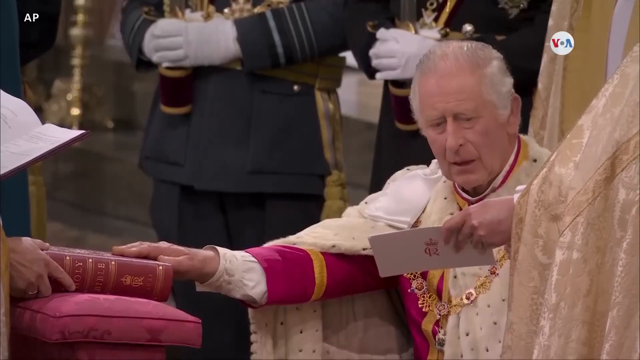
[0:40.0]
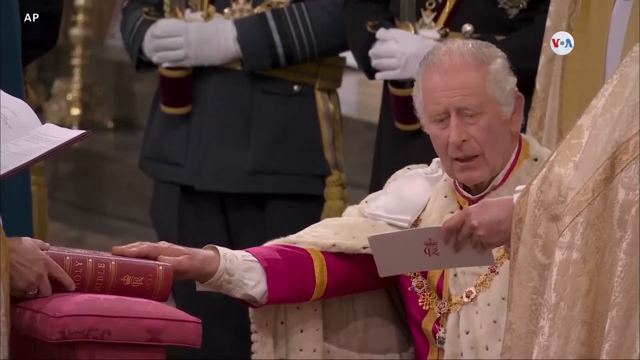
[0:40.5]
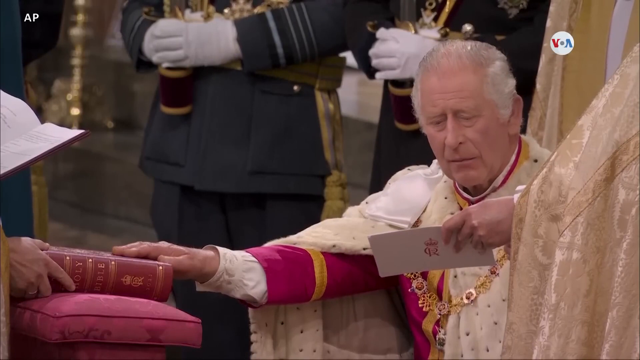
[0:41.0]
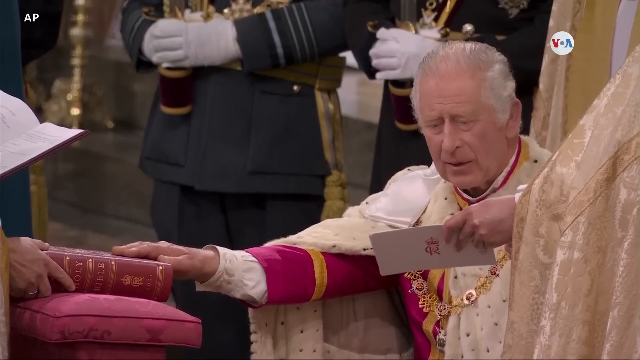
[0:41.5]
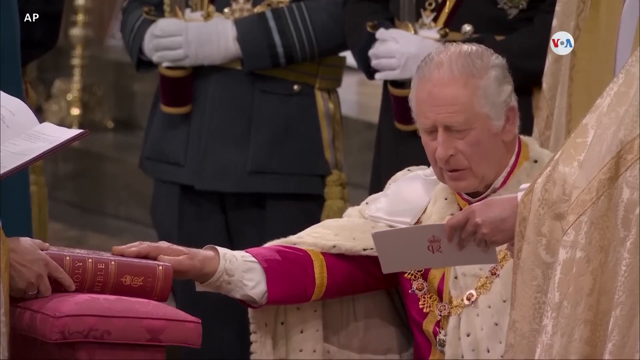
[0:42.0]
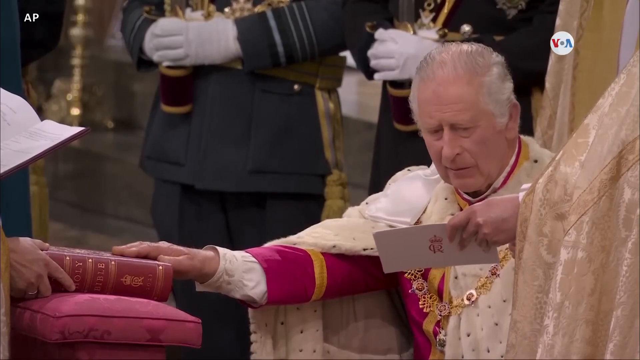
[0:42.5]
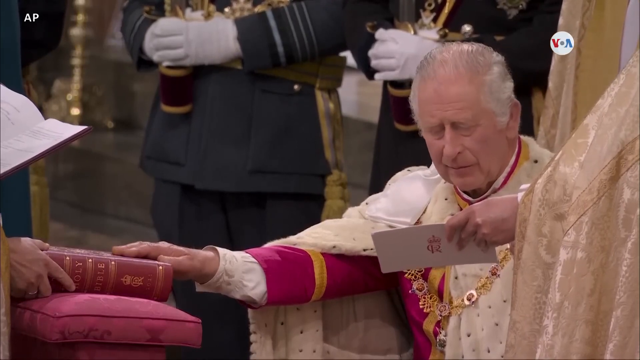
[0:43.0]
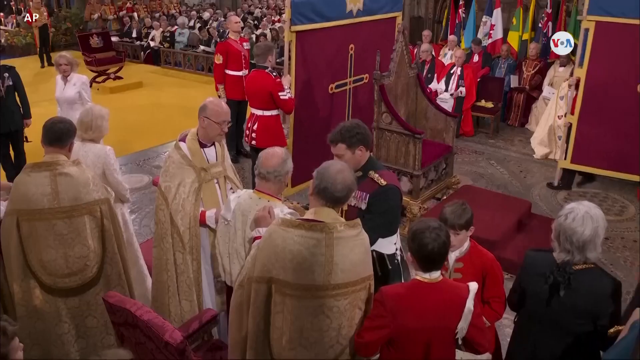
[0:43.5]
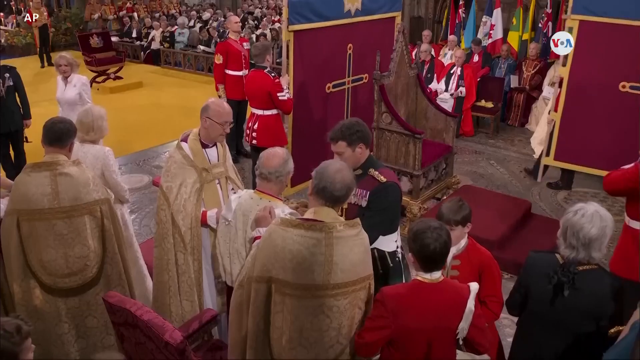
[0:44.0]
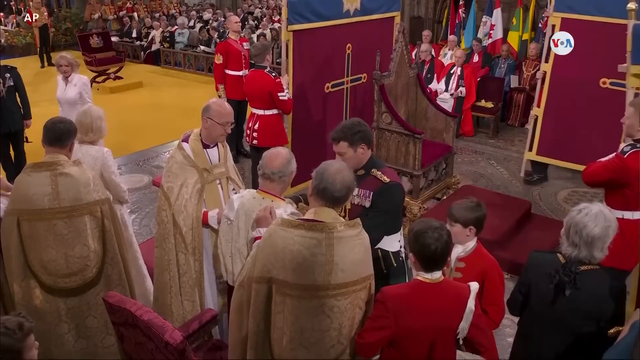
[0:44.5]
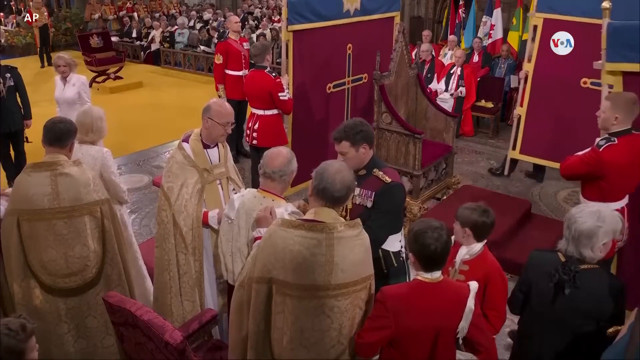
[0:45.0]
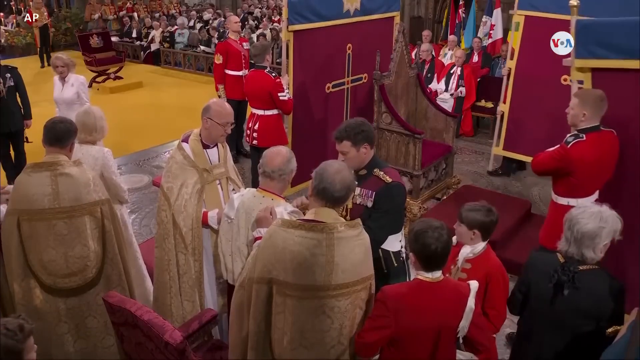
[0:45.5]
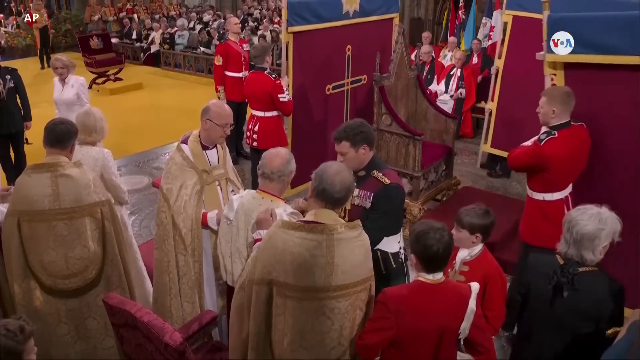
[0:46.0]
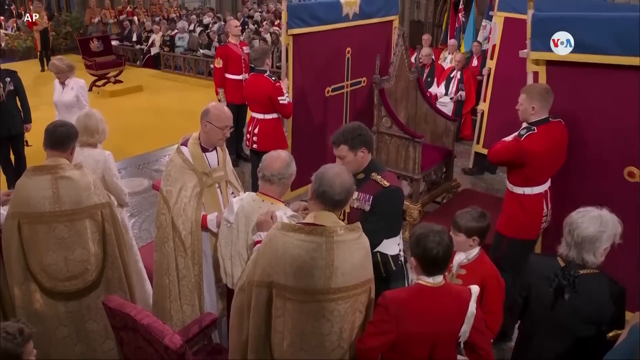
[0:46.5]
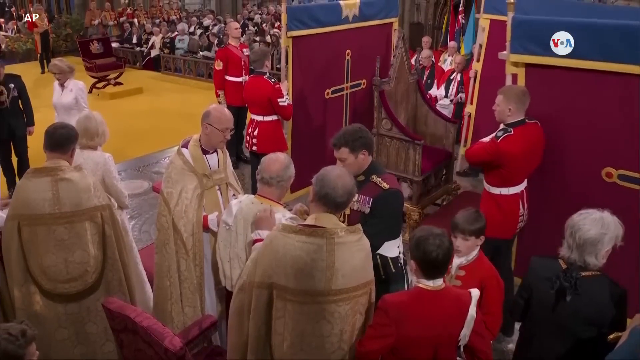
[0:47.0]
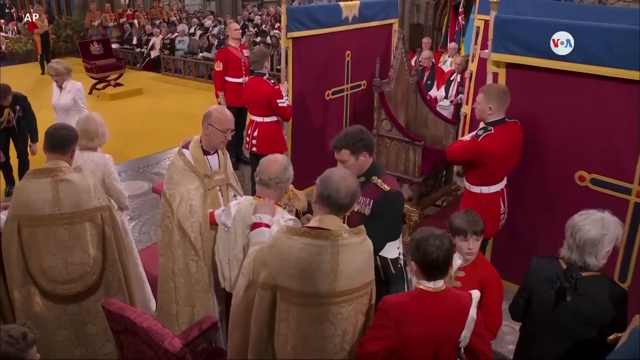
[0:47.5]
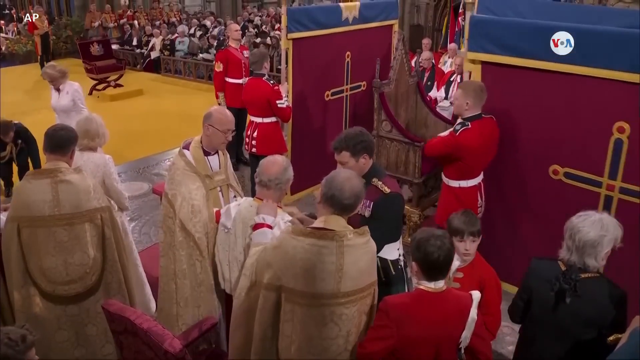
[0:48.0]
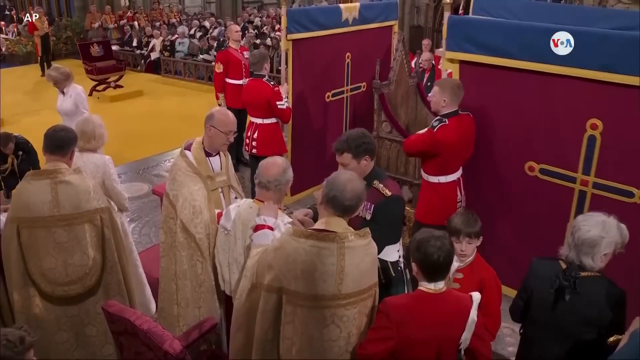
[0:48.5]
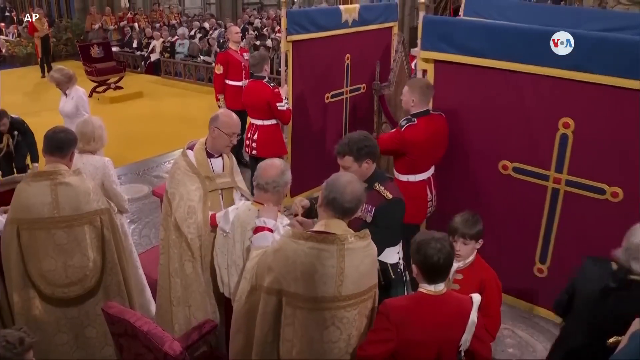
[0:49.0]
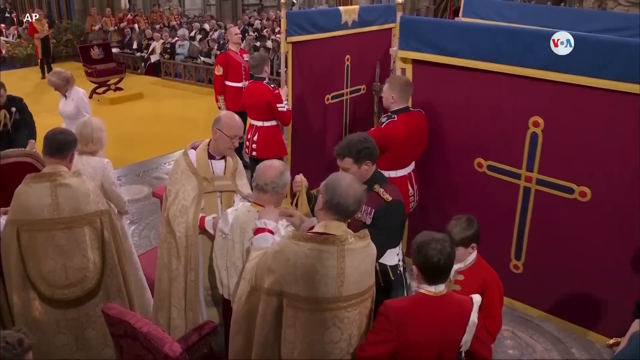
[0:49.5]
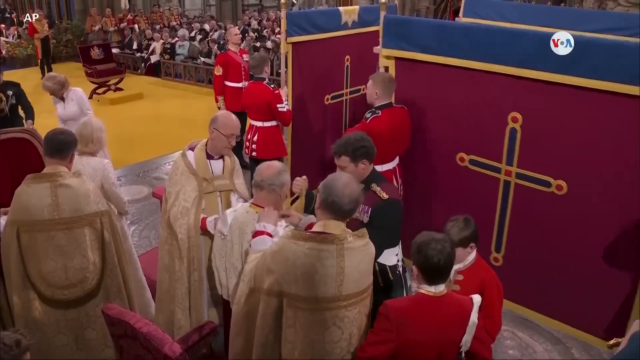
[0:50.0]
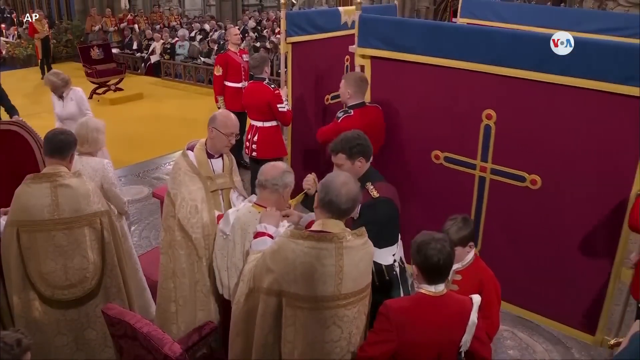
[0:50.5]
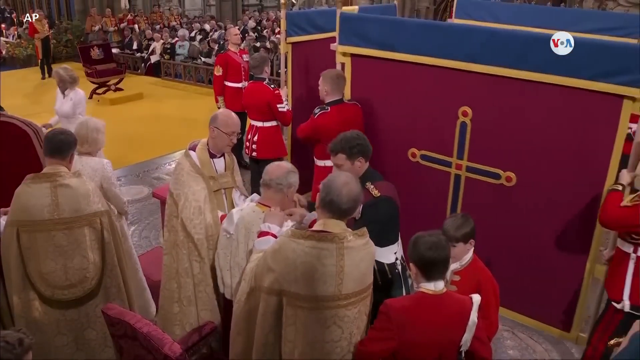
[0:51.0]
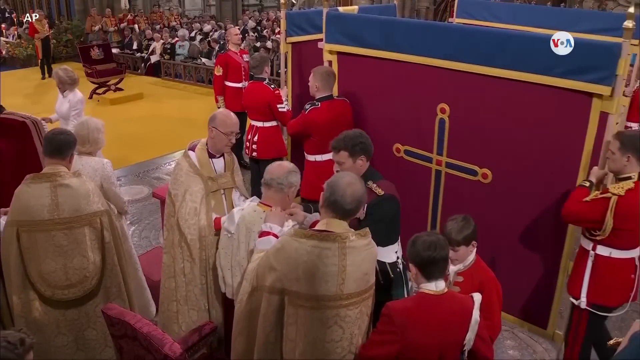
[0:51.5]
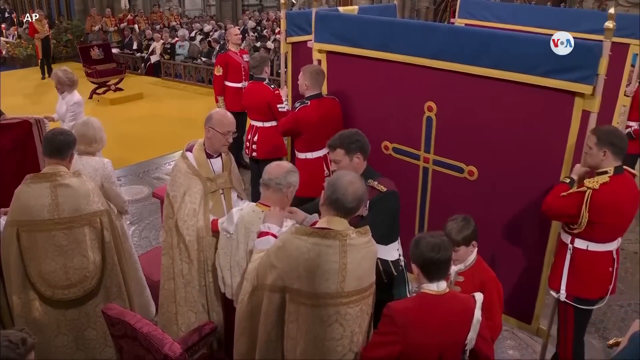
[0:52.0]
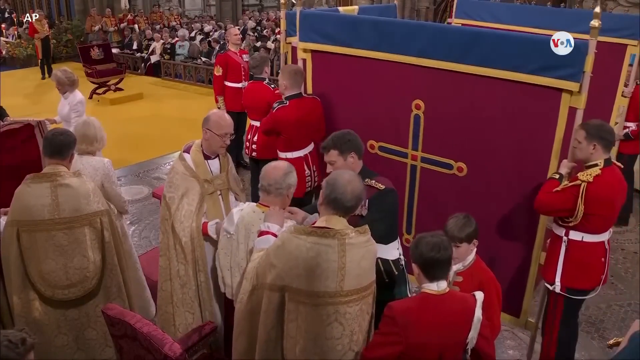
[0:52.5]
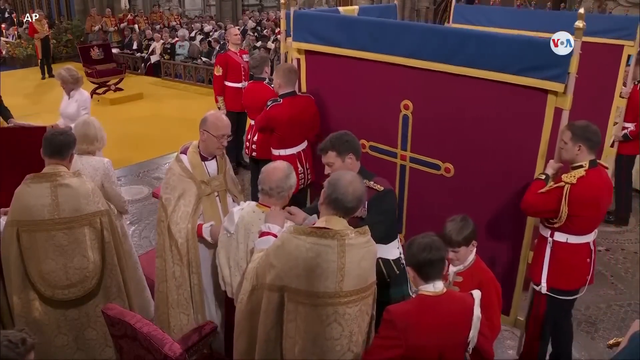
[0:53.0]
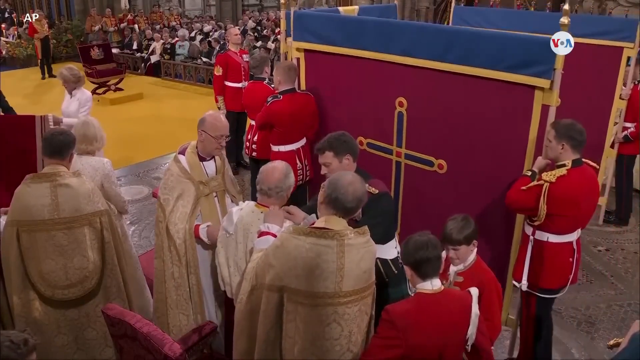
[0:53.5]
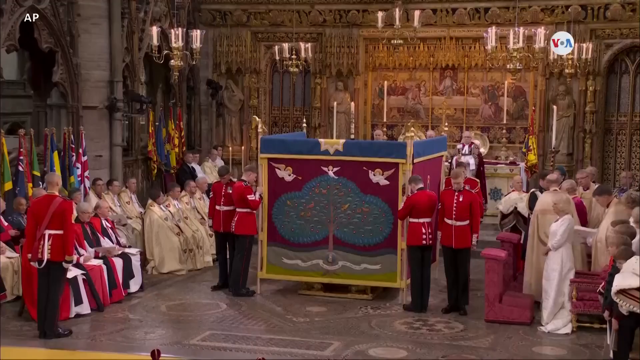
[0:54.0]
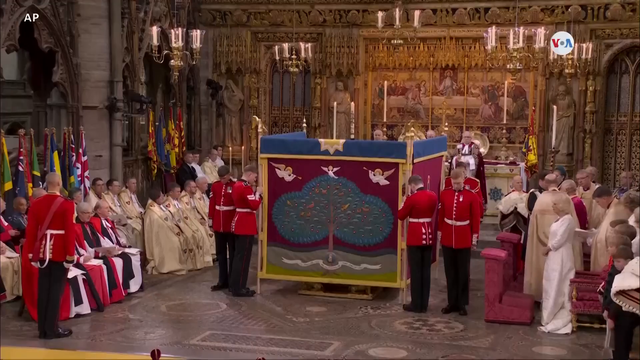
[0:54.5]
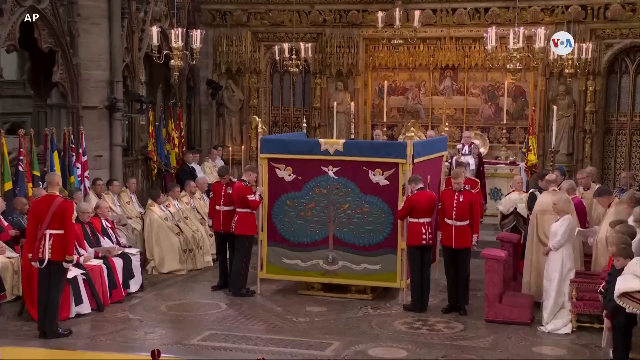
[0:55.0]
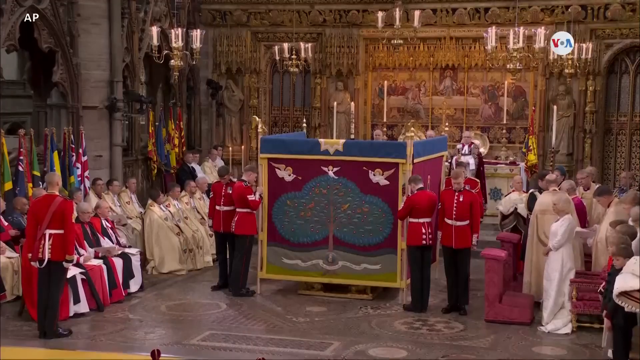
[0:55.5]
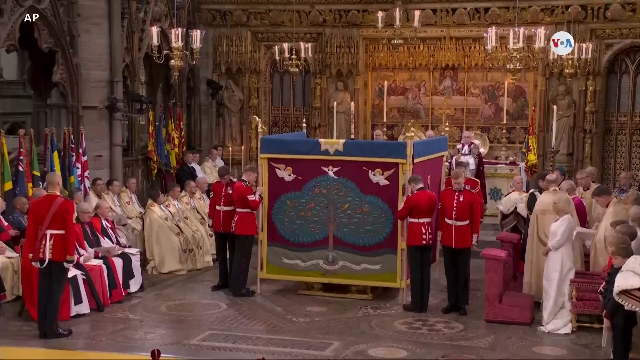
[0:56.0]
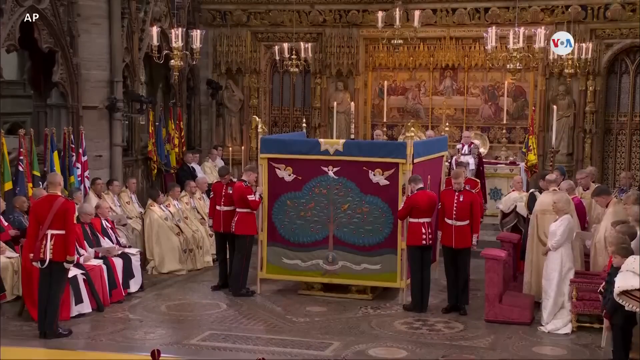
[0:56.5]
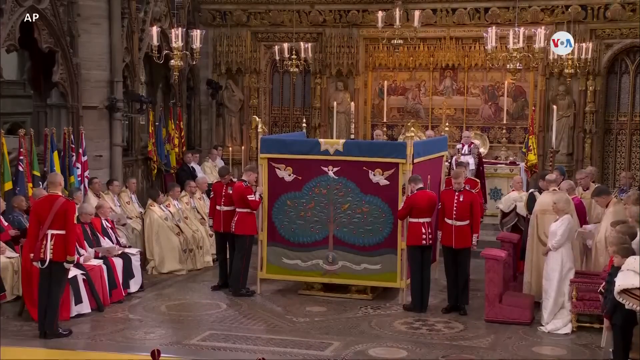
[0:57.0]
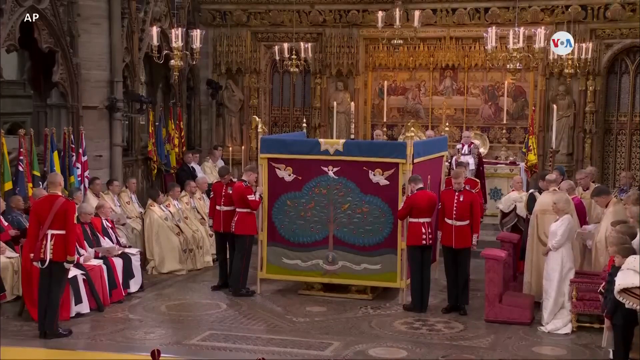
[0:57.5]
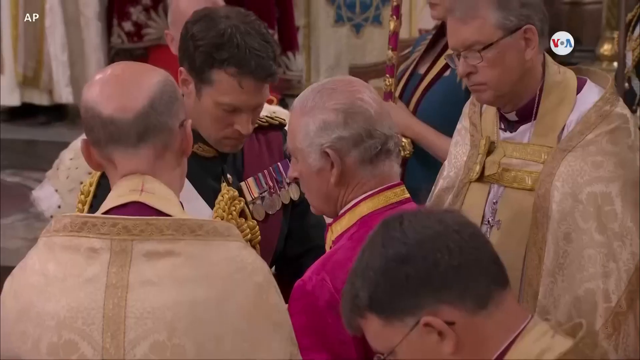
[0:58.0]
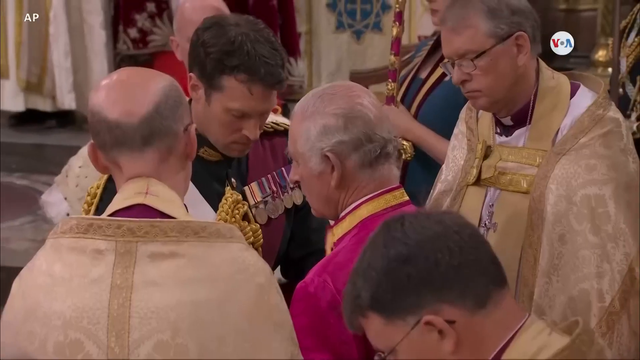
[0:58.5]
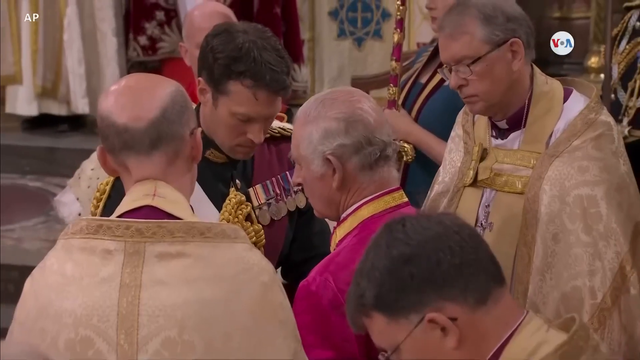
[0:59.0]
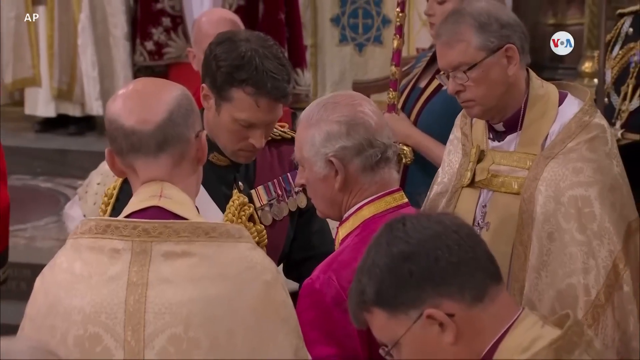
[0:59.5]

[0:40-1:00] King Charles reads from a white card held in front of him. The card has an R written on it with a crown symbol above it. As he reads, his right hand rests on a red bible that says "Holy Bible". The King wears a white robe with some sort of pink jacket underneath, and there are lots of necklace-type things around his neck, with yellow and silver beads. Behind him are two people in grey with white-gloved hands clasped together. A medium shot over the King's shoulder shows people, some in grey cloaks and some in black uniforms, who seem to be either tying some clothing onto him or taking something off. In front of him, what look like soldiers in red uniforms with yellow decorations on the side move some sort of temporary side of a box with a cross on it into the hall. A cut to a medium shot shows a three-sided box blocking whatever is happening inside from the view of the people in the hall and from the camera; the box is surrounded by soldiers. Another shot shows King Charles wearing pink, surrounded by people in light sandy cloaks, with a man in front of him wearing a black and purple uniform with military medals attached.